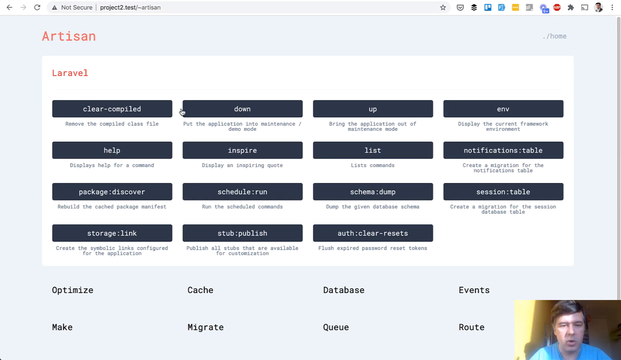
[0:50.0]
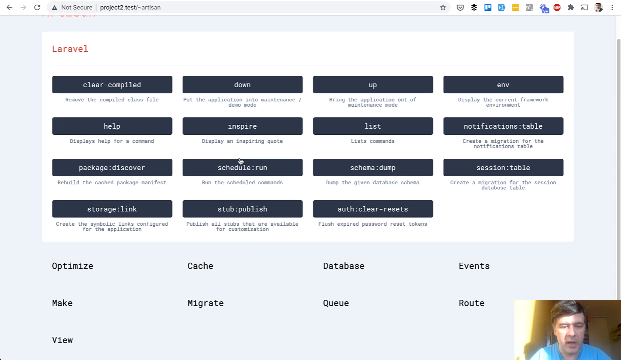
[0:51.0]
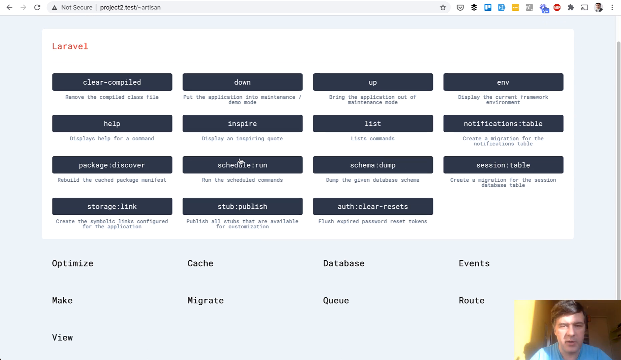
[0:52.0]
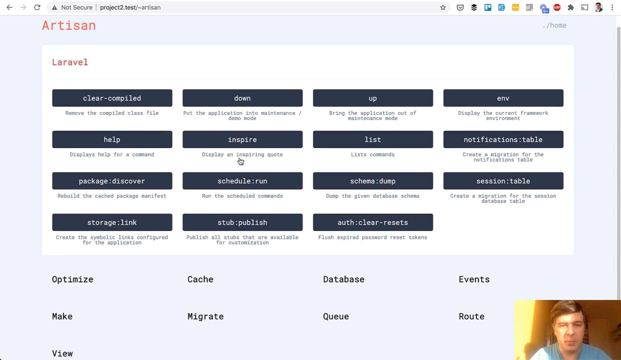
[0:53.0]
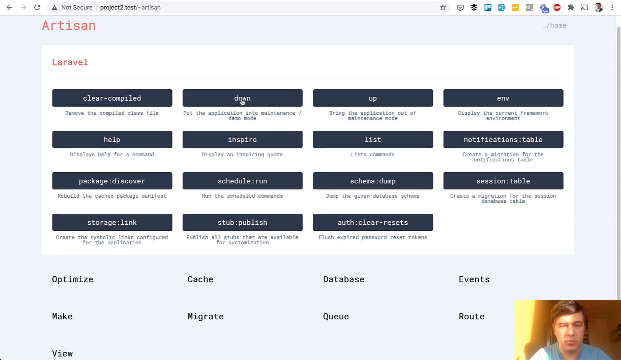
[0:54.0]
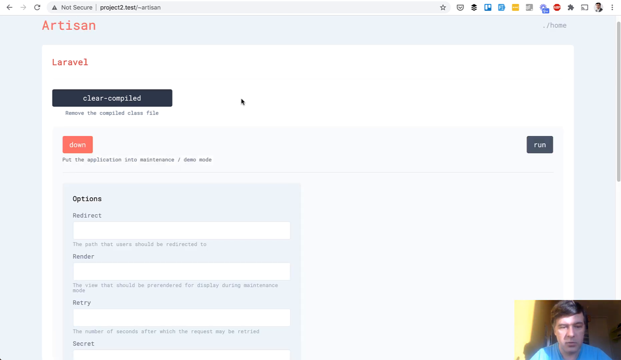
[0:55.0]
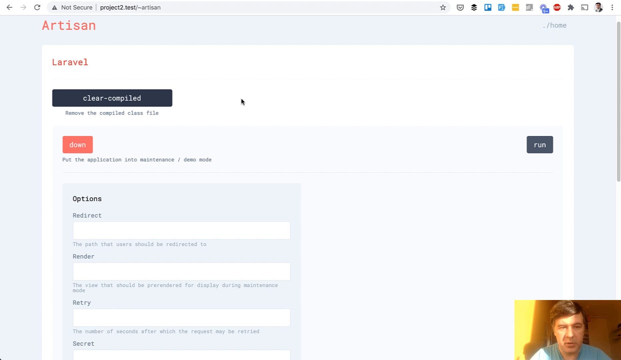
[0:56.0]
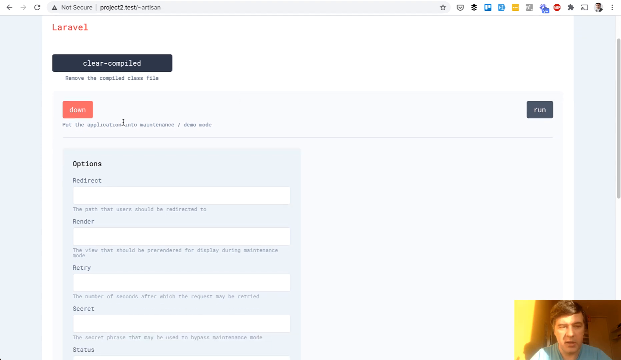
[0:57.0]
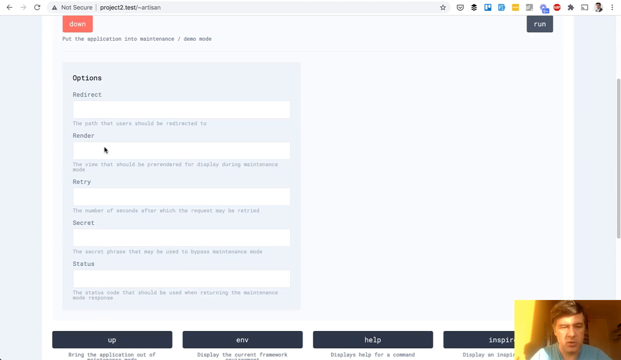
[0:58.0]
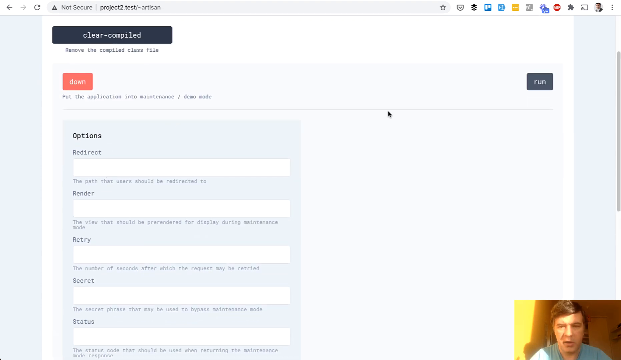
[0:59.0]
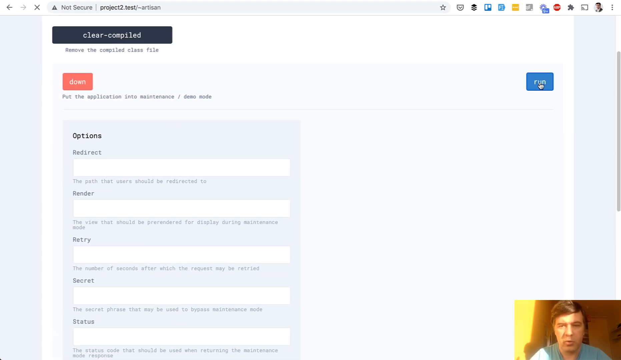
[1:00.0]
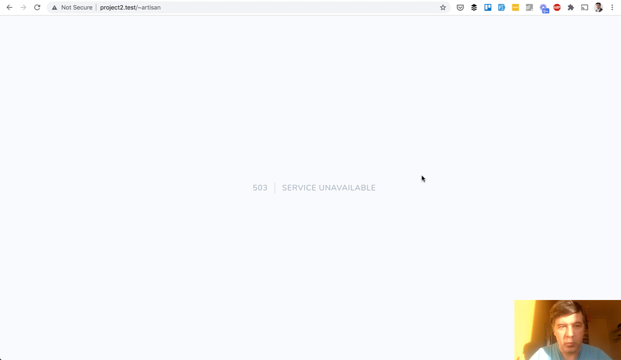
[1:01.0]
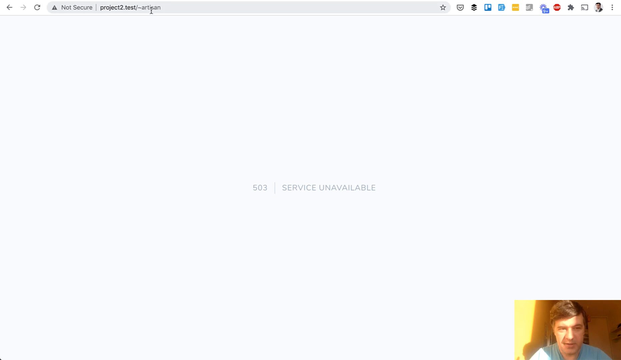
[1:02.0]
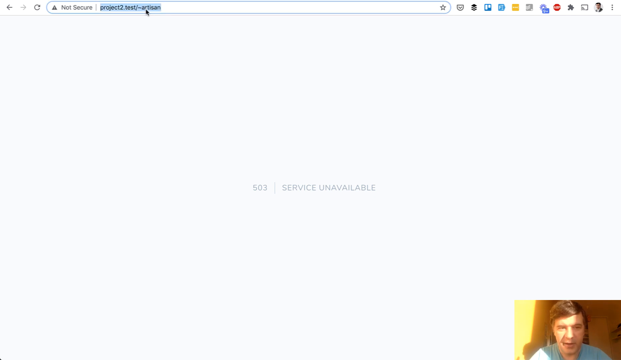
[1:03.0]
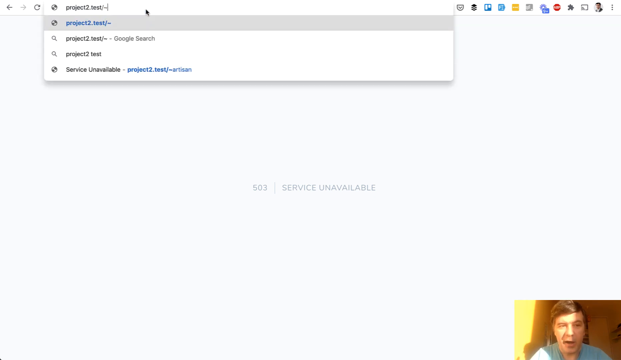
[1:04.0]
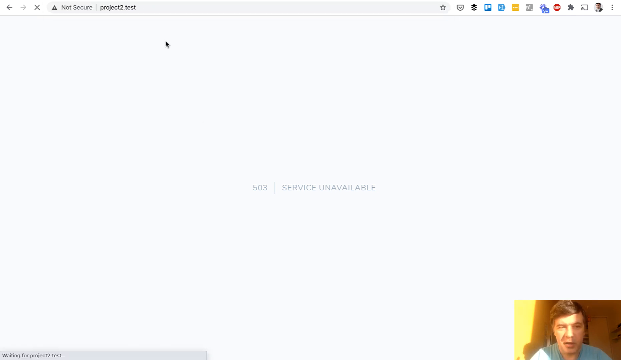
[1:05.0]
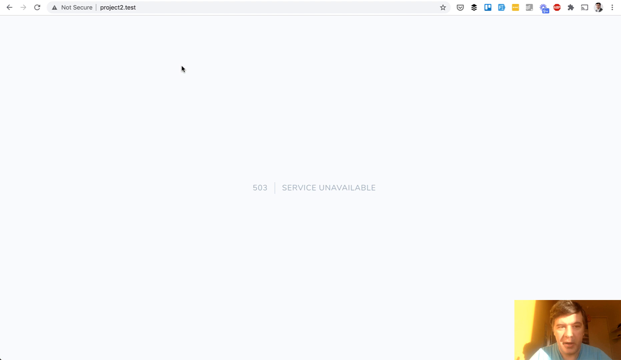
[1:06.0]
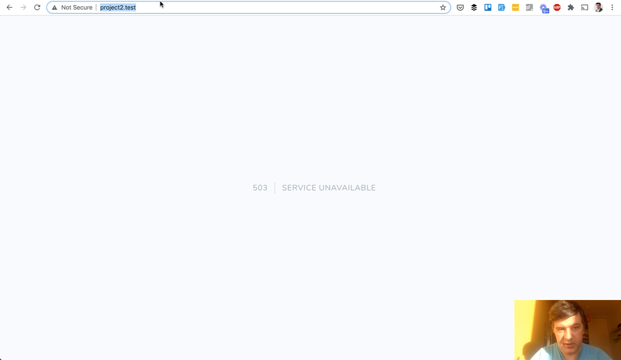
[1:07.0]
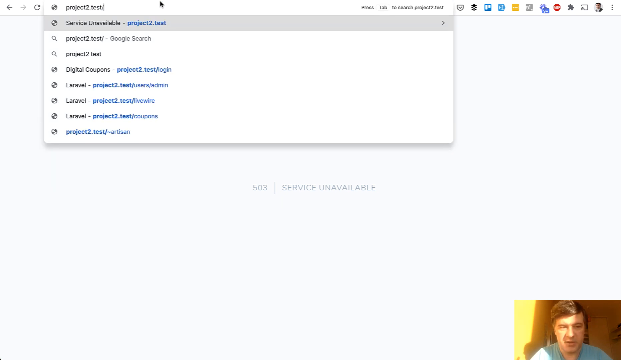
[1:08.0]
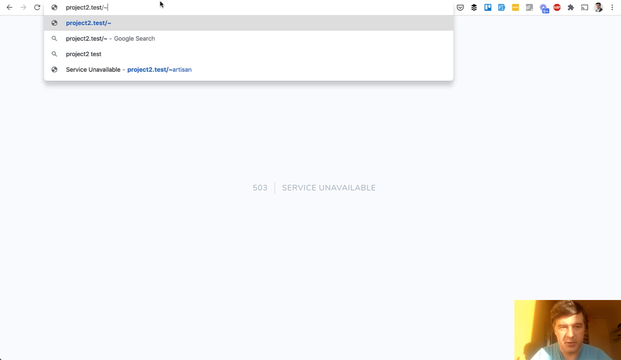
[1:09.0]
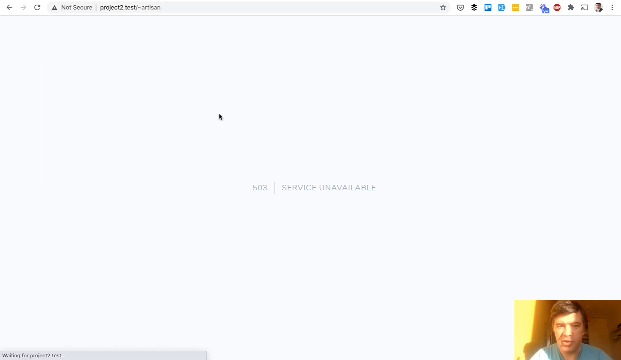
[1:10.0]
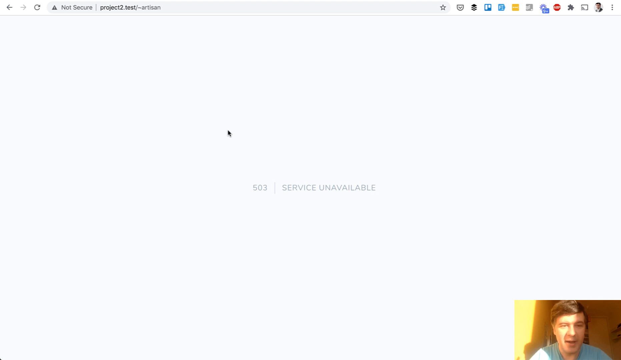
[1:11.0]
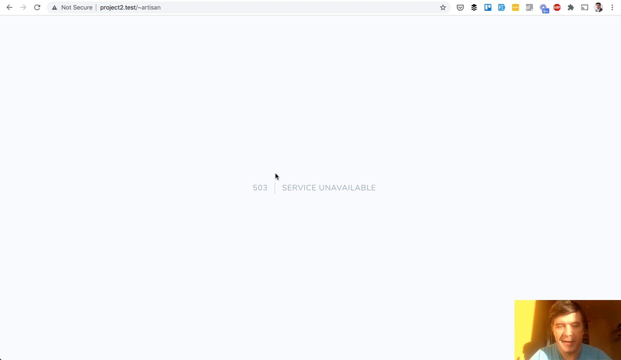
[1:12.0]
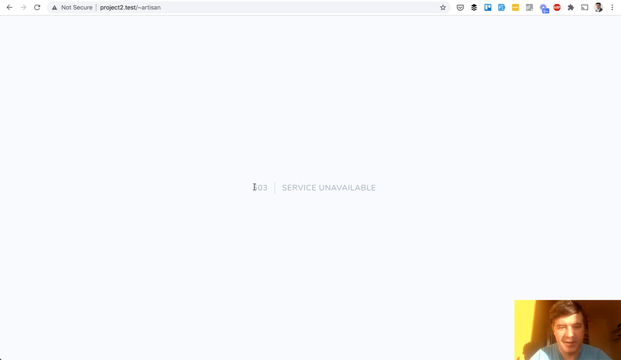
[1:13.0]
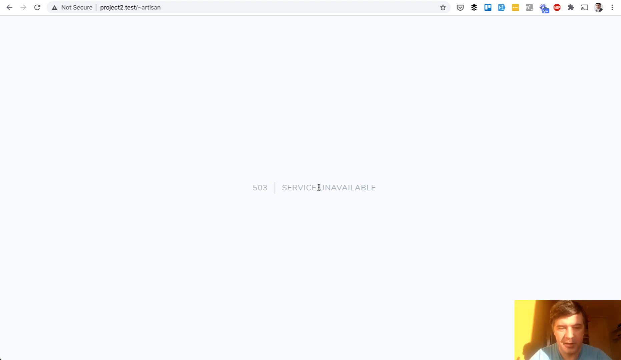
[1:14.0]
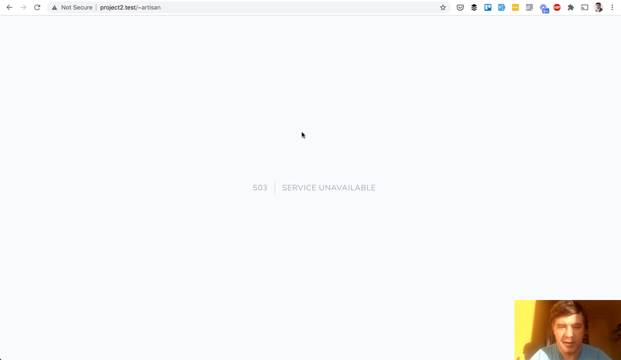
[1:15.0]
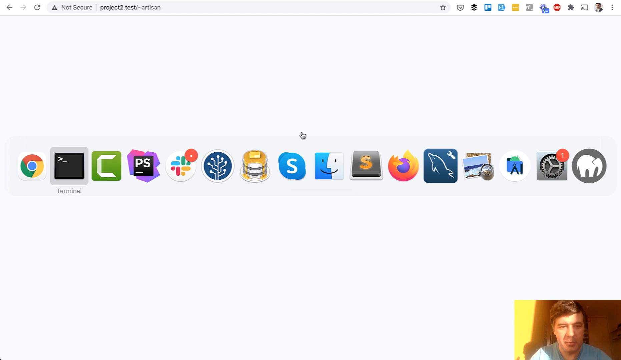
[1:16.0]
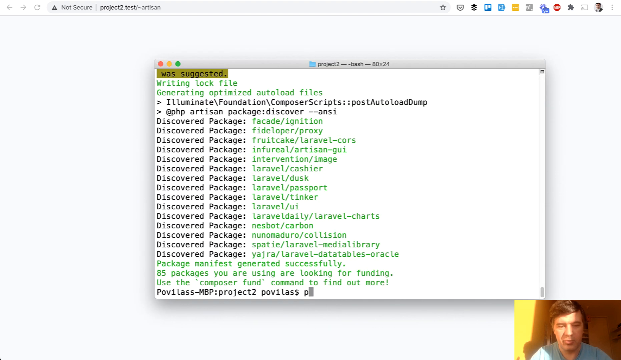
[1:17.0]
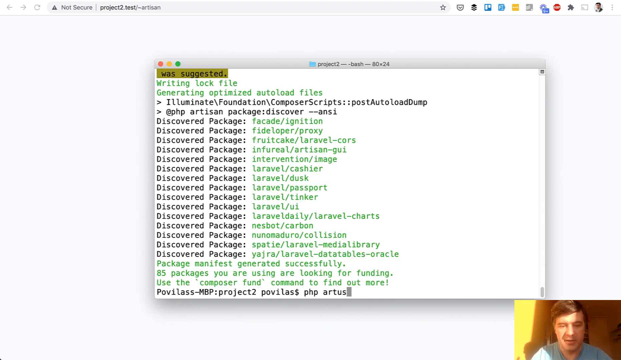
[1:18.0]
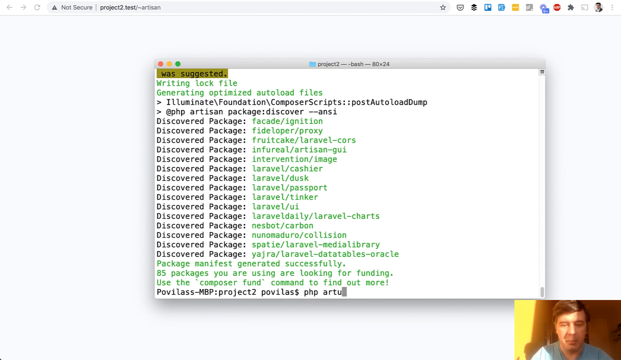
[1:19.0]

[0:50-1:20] The Caucasian man with brunette hair and a light blue shirt is in the bottom corner of the screen, with sunlight coming into the room, showing it is daytime. He scrolls on the screen, which shows "Laravel" and "clear compiled," along with options including "redirect," "render," "retry" and "secret." He hits the run button and the page shows "503 service unavailable." He goes to the search bar and types "project2.test," then "project2.test/-artisan," and waits. A screen then appears reading "write and lock file" and "generate and optimize autoload files," with a list of items such as "discover package."